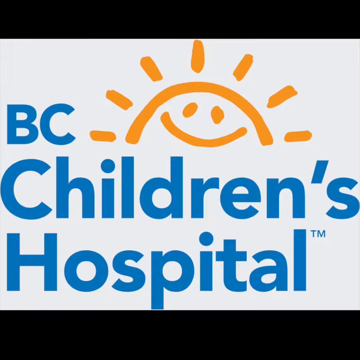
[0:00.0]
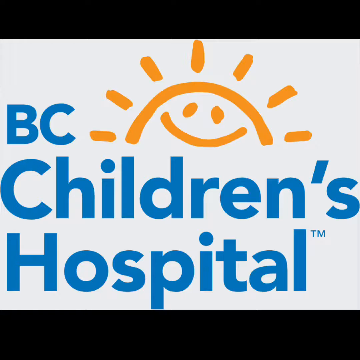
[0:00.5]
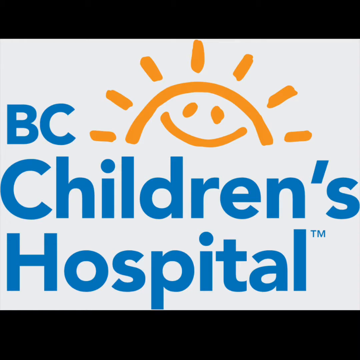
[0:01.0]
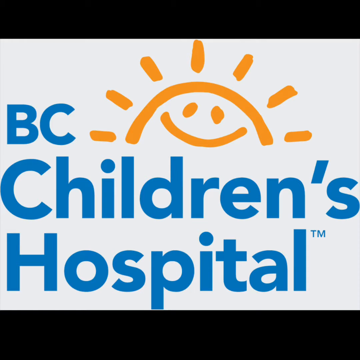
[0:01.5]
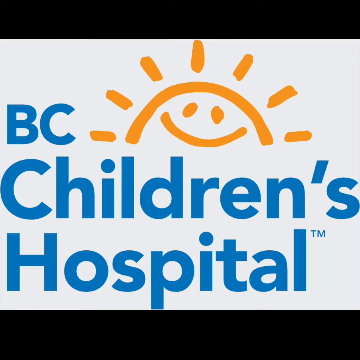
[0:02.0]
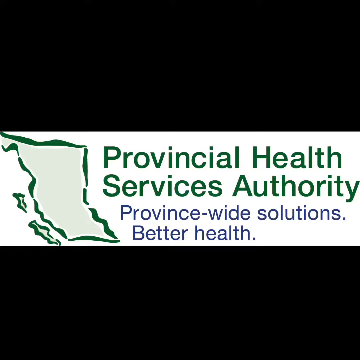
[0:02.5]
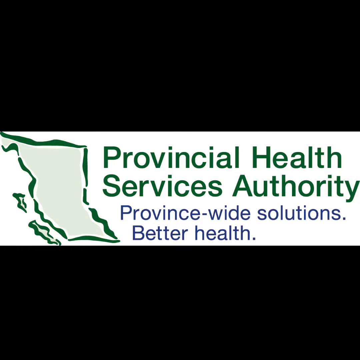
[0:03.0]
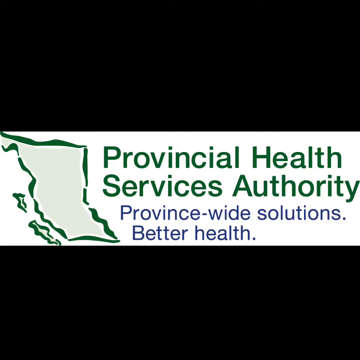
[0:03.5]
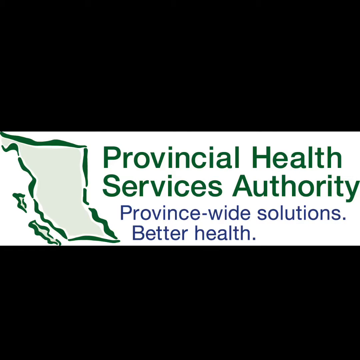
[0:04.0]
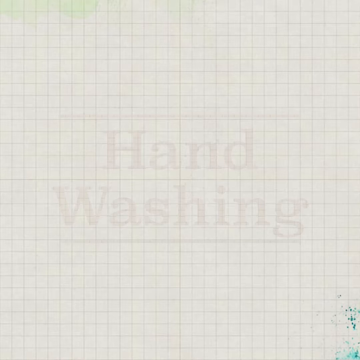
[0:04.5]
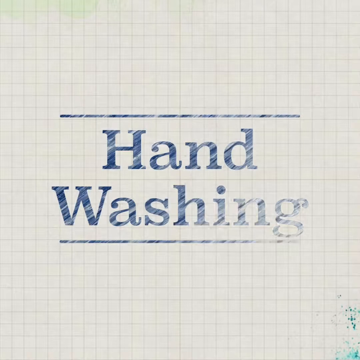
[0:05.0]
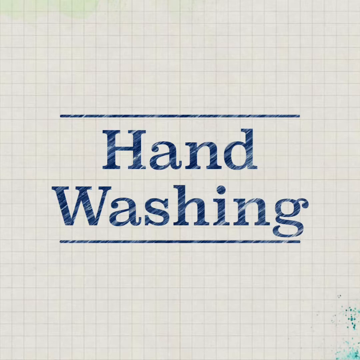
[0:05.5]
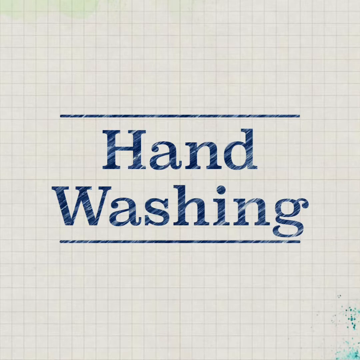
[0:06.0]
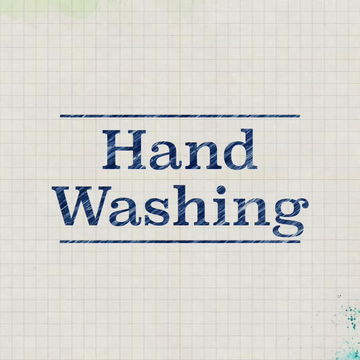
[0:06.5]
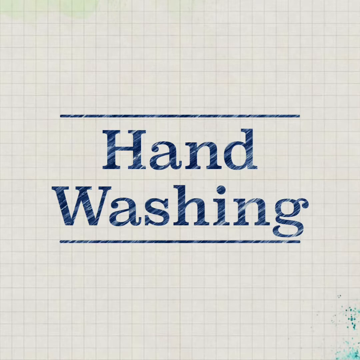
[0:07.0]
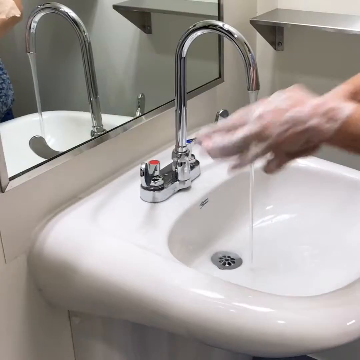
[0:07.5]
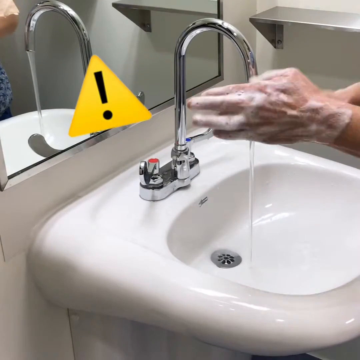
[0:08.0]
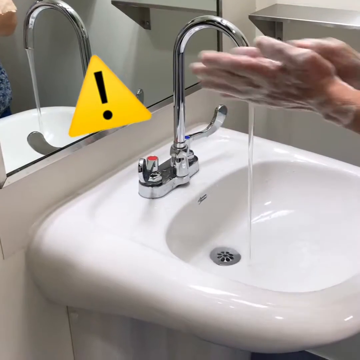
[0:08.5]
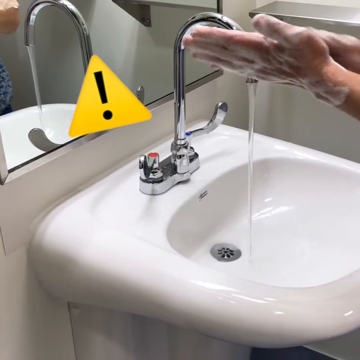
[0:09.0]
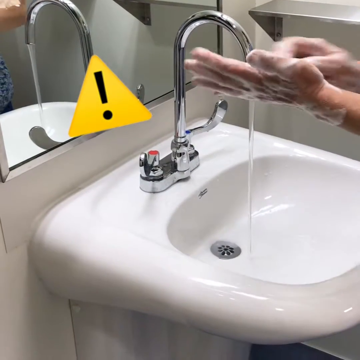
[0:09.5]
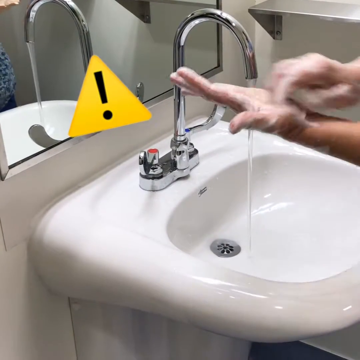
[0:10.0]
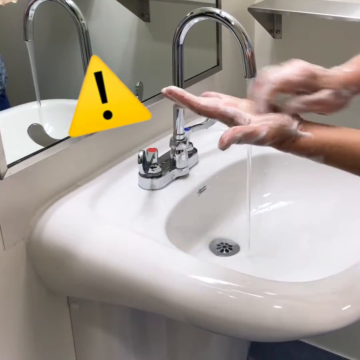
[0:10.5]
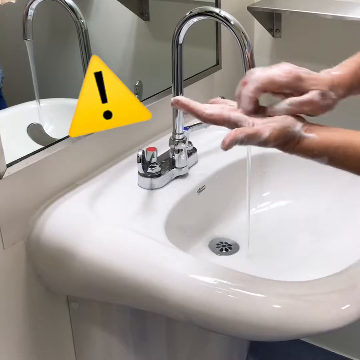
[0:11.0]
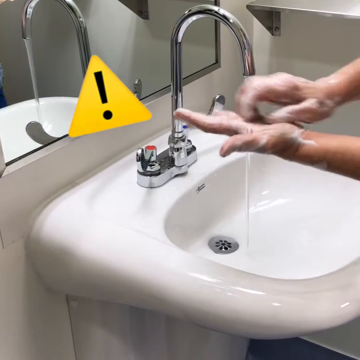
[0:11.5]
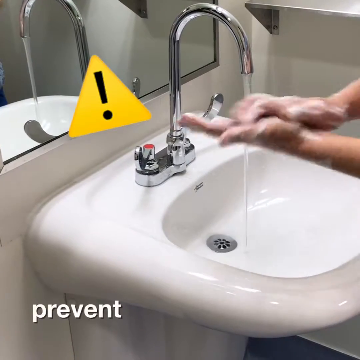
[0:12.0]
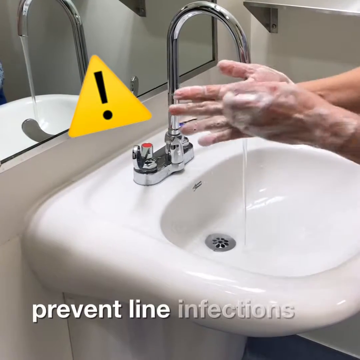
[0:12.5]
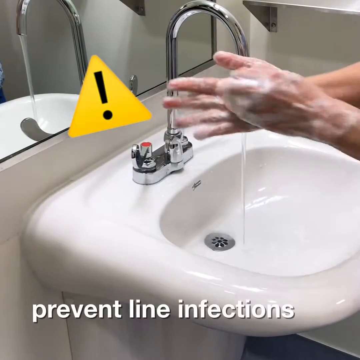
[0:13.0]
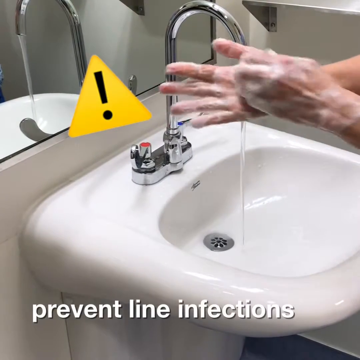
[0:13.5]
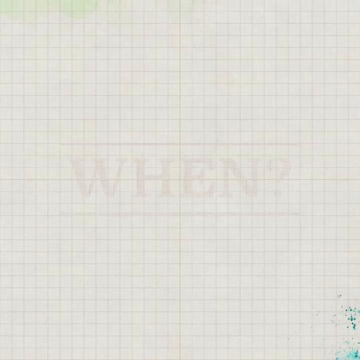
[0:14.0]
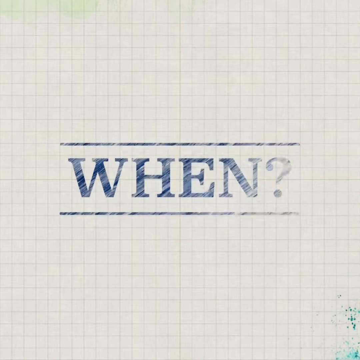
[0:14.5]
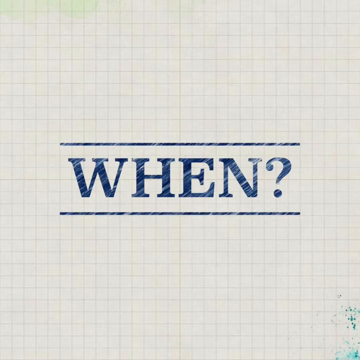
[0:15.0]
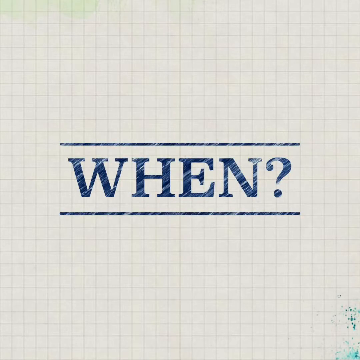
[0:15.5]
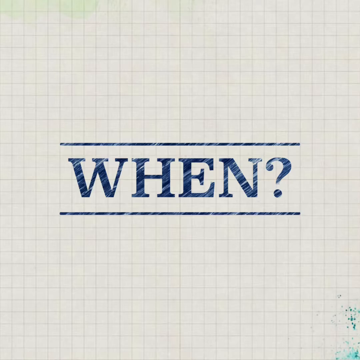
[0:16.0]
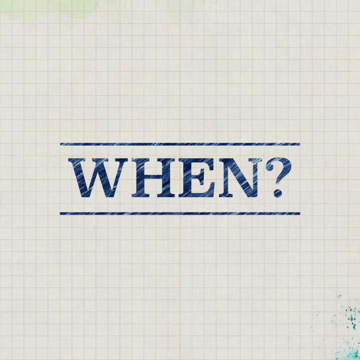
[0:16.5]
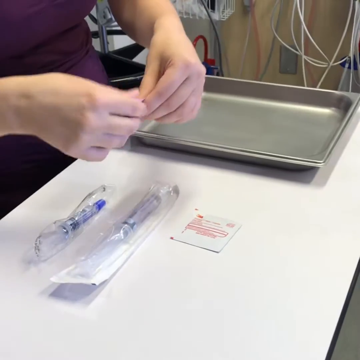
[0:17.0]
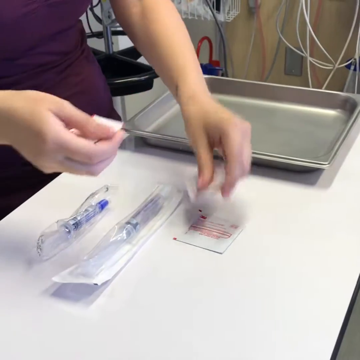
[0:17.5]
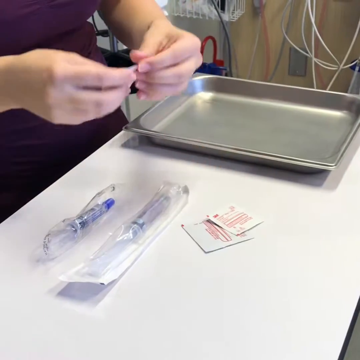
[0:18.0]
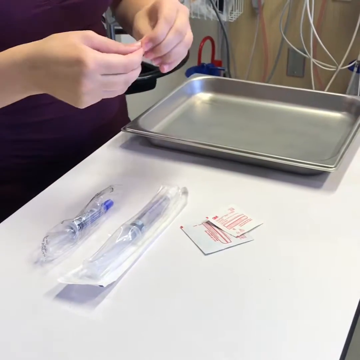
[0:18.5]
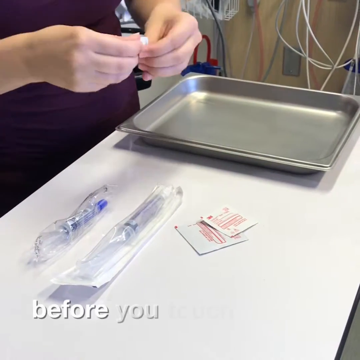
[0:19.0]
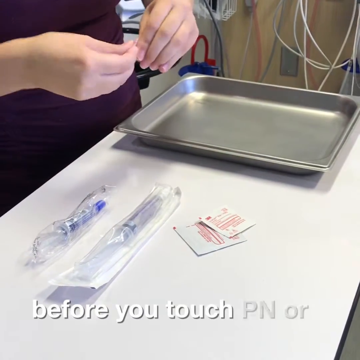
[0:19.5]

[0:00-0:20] The video, for B.C. Children's Hospital, opens on a slide with a white background and black bars at the top and bottom. The lettering "B.C. Children's Hospital TM" is in red, and a hand-drawn, childlike picture of a smiling half sun is at the upper right. The video then begins, apparently about how to avoid Lyme disease, showing somebody scratching their hand very vigorously. A provincial health authority slide about handwashing appears, showing somebody over a sink scratching the palm of their hand, along with a warning. A picture with the word "when" follows. Before that, there is a picture of possibly central Florida or some state area. Somebody then starts to open what appears to be an alcohol prep.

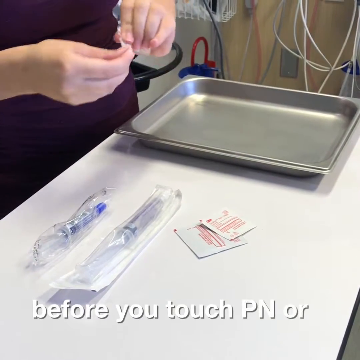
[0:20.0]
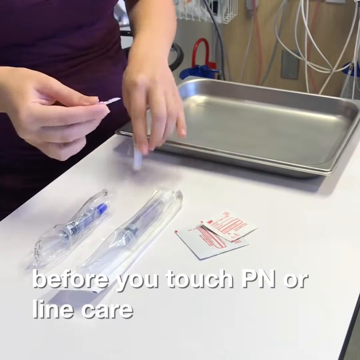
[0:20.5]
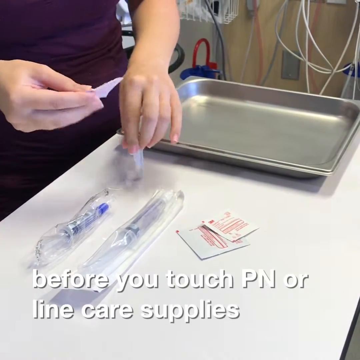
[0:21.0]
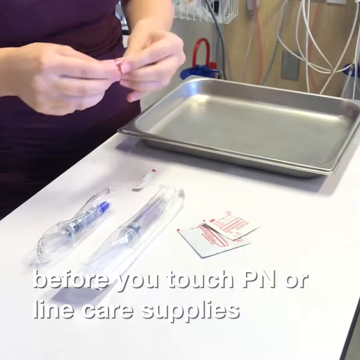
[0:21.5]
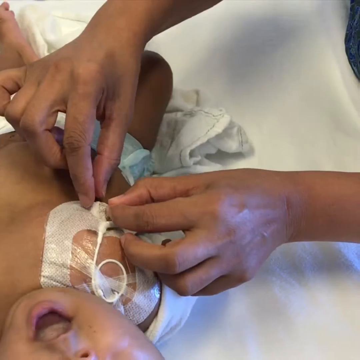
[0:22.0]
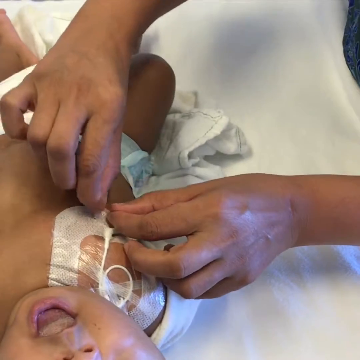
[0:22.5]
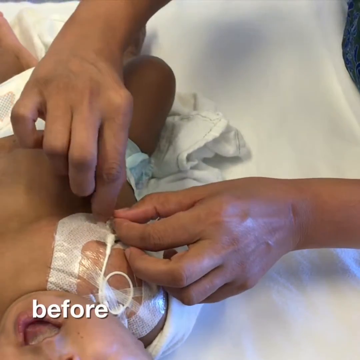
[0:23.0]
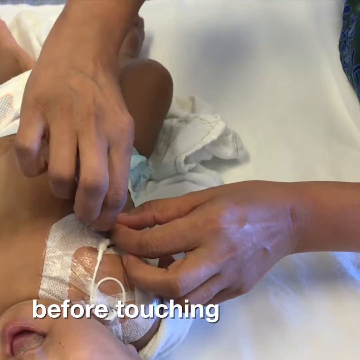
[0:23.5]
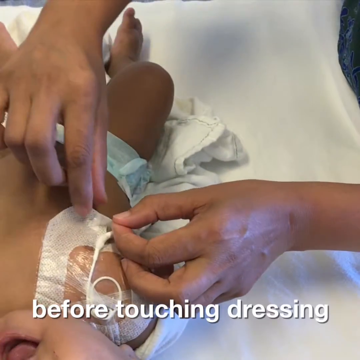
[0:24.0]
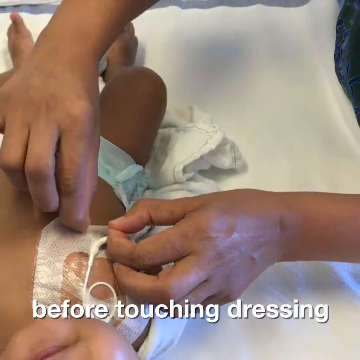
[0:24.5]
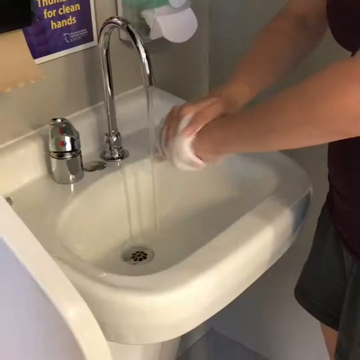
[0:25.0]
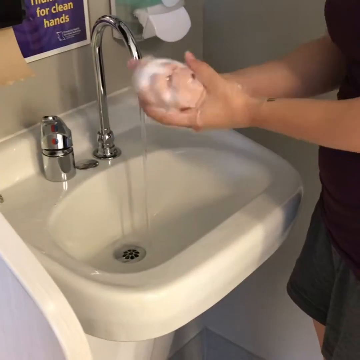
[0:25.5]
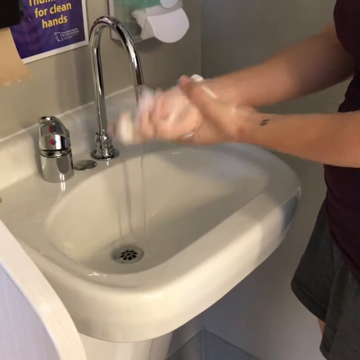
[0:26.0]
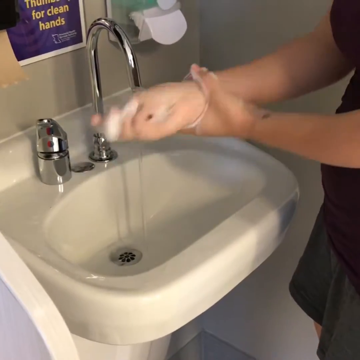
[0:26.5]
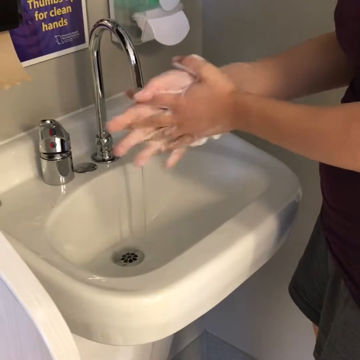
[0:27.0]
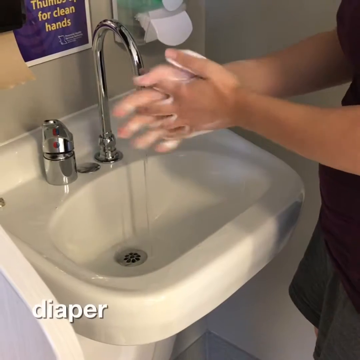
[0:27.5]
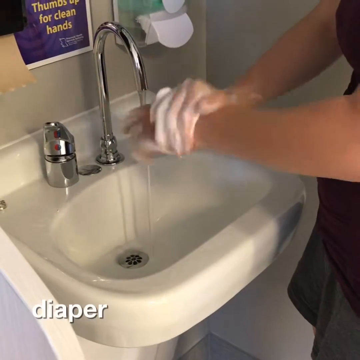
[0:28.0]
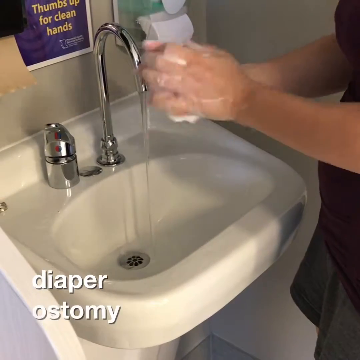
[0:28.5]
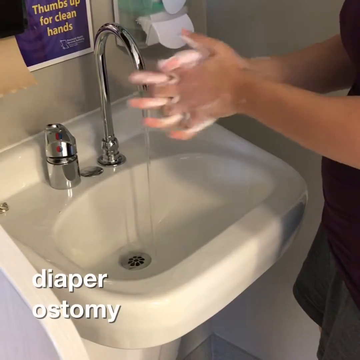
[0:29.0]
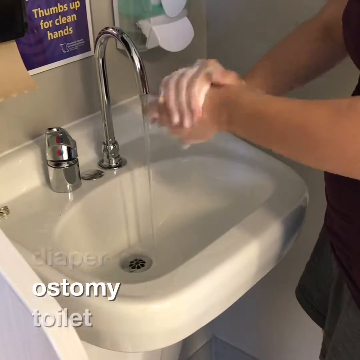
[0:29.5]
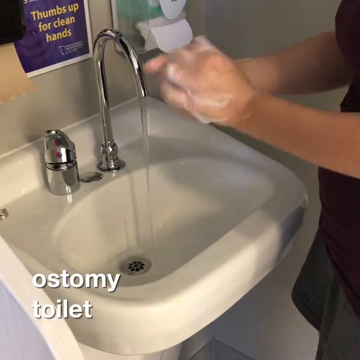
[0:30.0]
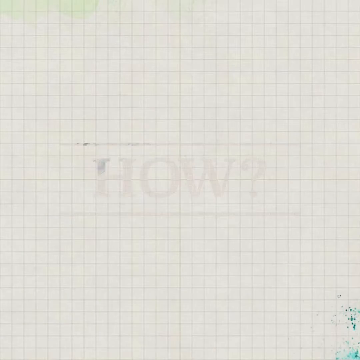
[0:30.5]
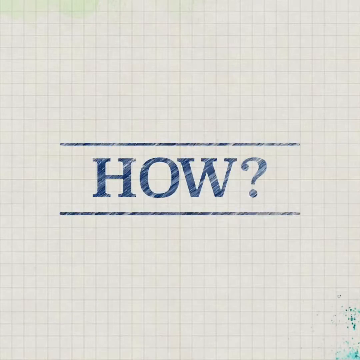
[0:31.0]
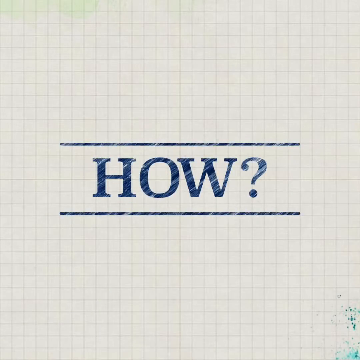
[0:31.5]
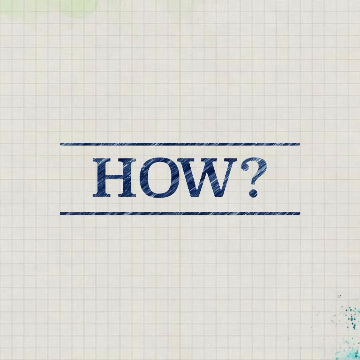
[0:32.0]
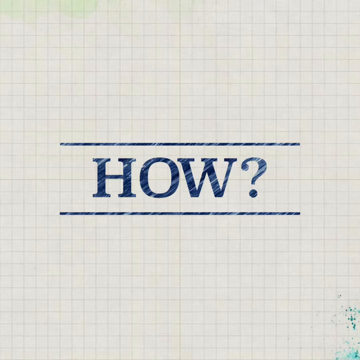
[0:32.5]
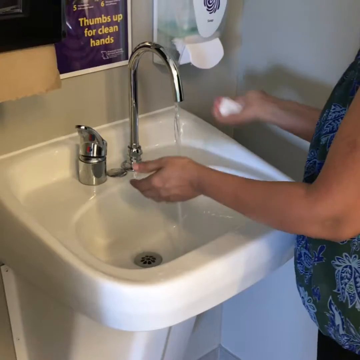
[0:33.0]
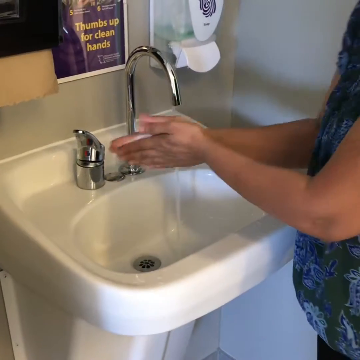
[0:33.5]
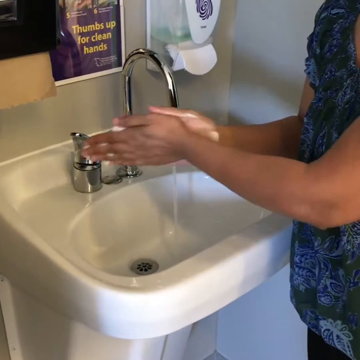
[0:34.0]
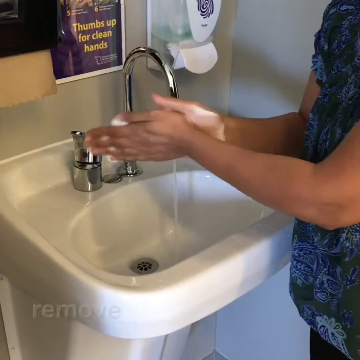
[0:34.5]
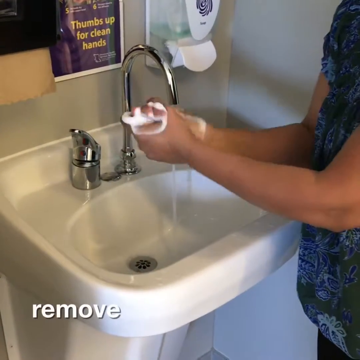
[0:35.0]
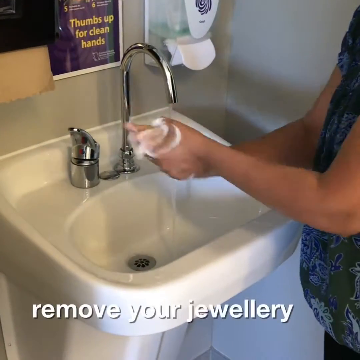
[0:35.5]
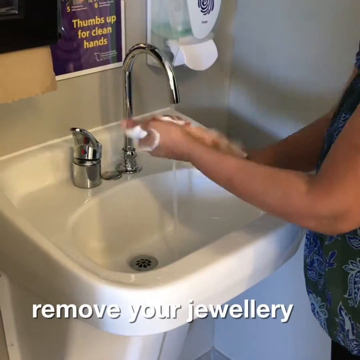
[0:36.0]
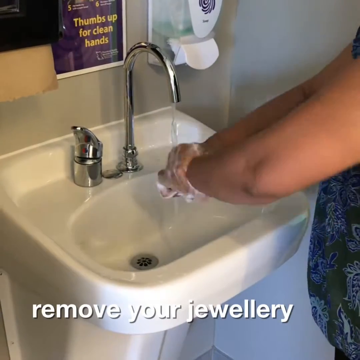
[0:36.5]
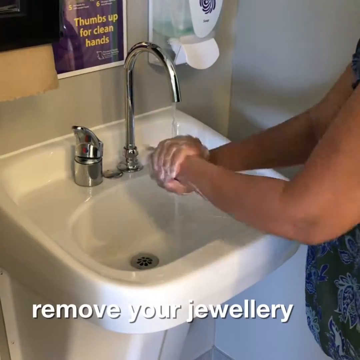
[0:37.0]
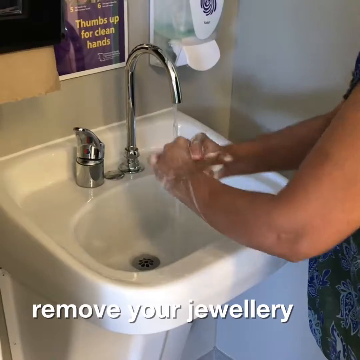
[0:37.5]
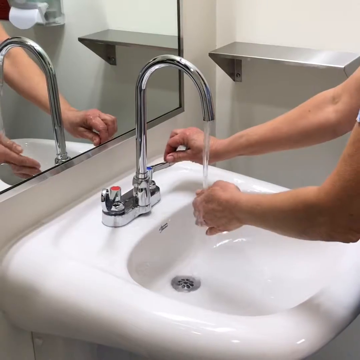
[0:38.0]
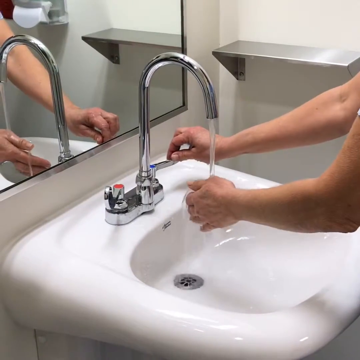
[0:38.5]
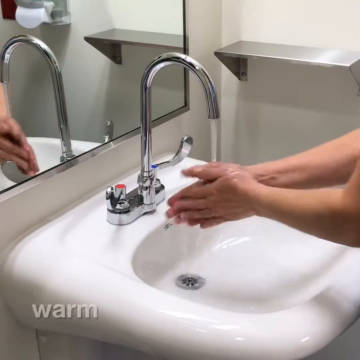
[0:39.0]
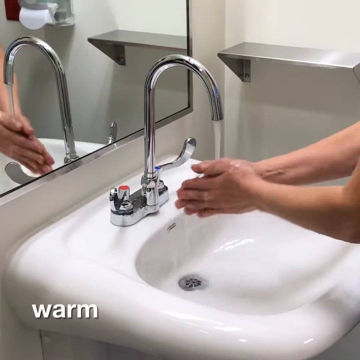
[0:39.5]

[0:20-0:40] Someone is opening an alcohol swab or something similar, and the text "before touching dressing" appears. A picture of a baby is shown with the words "dressing", "diaper" and "ostomy", and a person washes his hands in a sink with a curled metal faucet. The text reads "remove your jewelry" and "warm water". Each phrase appears with a different section of somebody carefully washing their hands under a sink, interlacing their fingers and putting a lot of soap on their hands. The video then lists a group of situations, such as diaper and ostomy, in which hands should be washed before, after, or both.